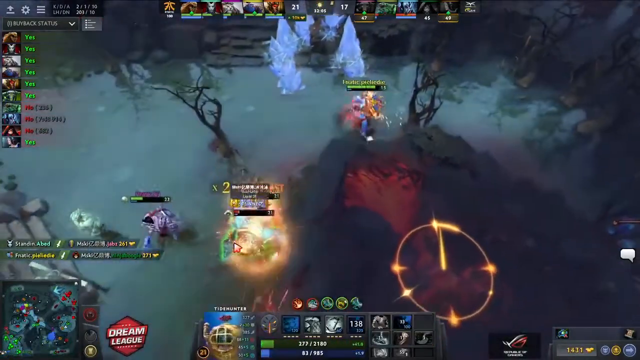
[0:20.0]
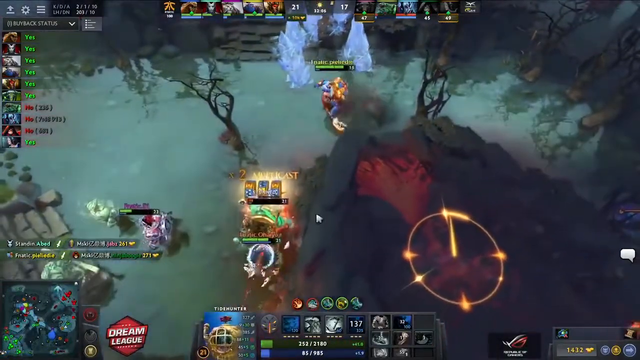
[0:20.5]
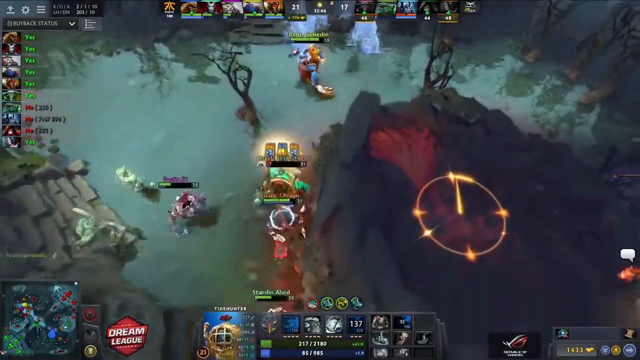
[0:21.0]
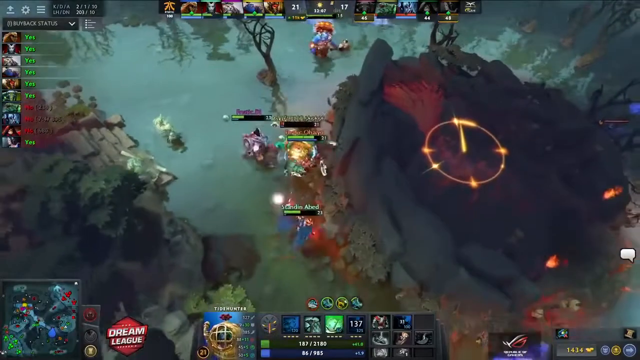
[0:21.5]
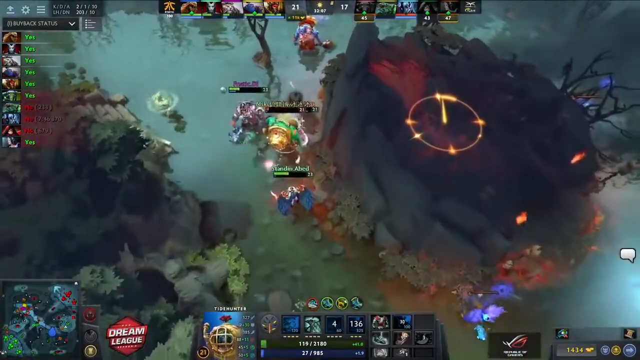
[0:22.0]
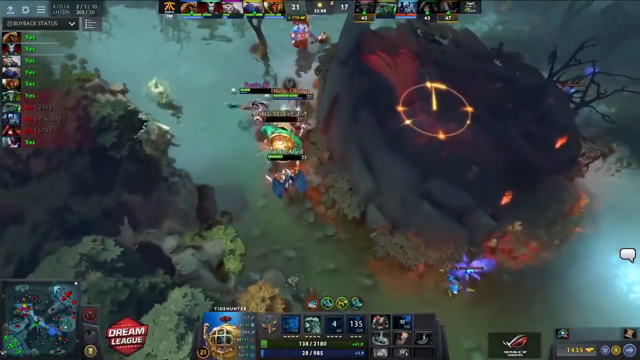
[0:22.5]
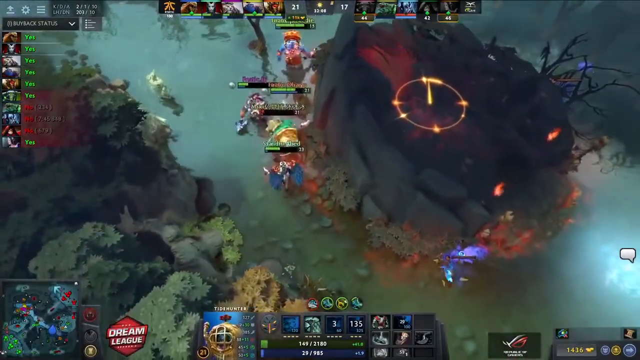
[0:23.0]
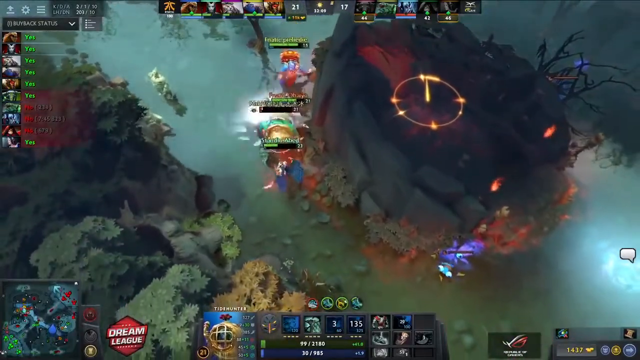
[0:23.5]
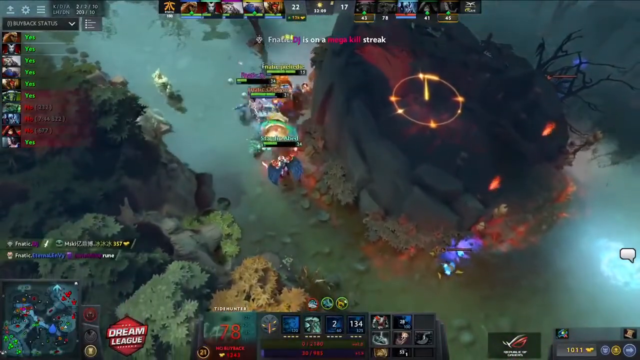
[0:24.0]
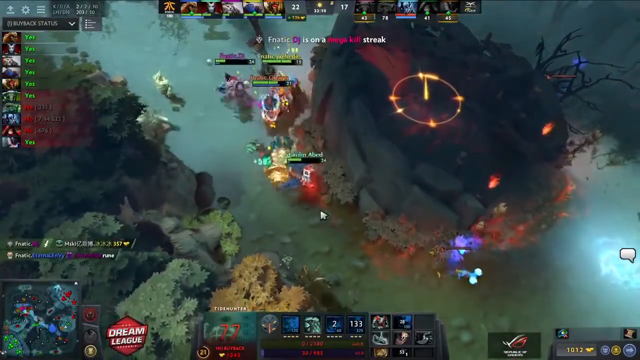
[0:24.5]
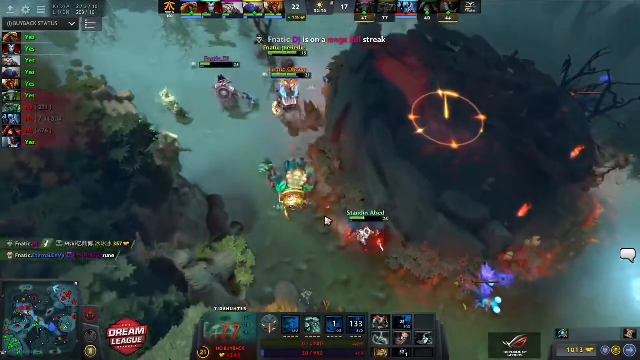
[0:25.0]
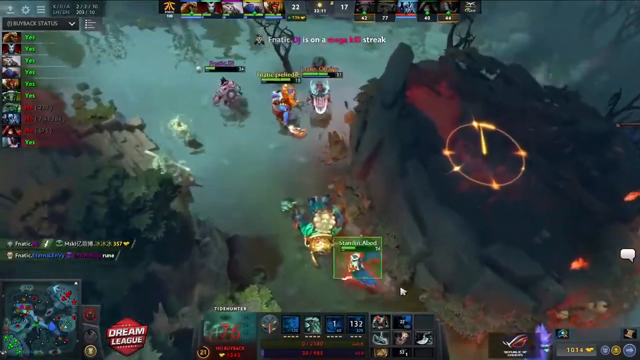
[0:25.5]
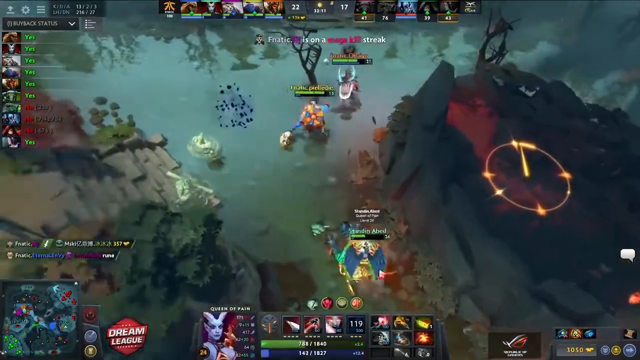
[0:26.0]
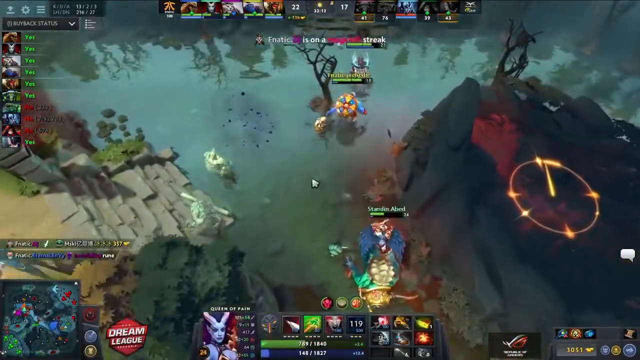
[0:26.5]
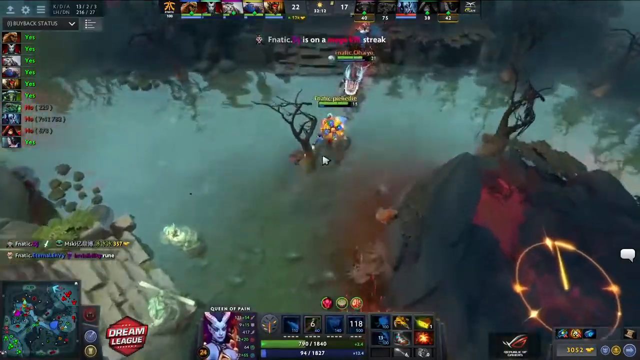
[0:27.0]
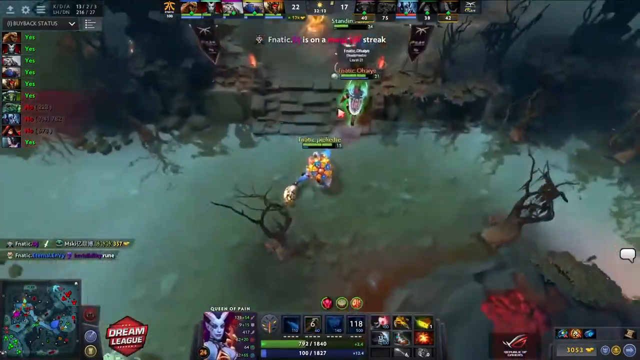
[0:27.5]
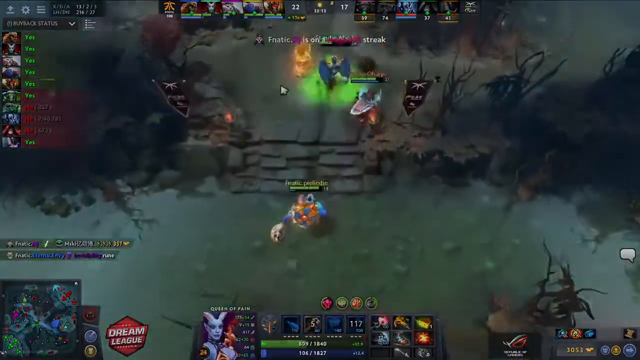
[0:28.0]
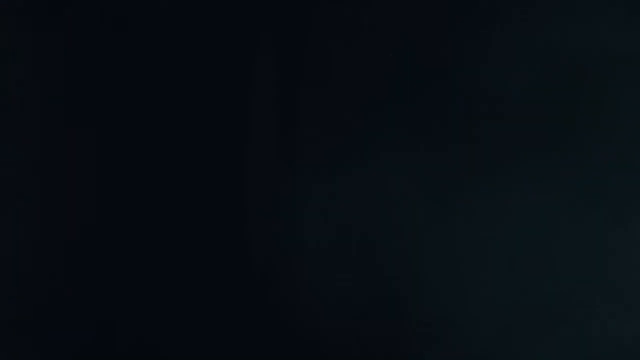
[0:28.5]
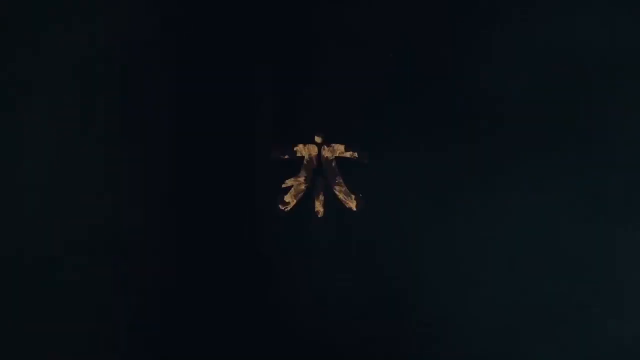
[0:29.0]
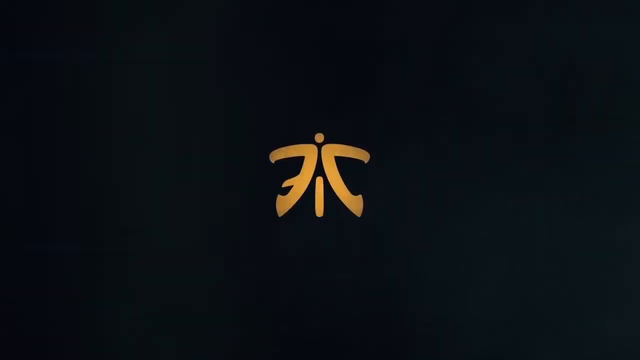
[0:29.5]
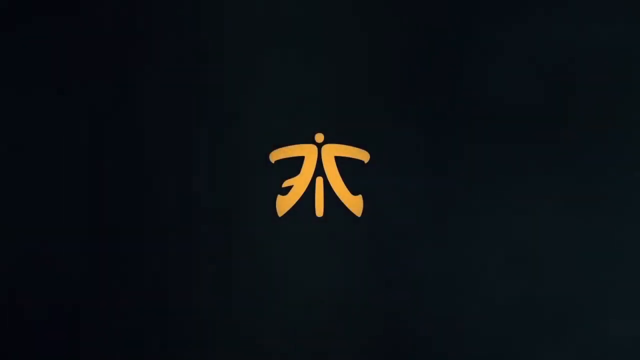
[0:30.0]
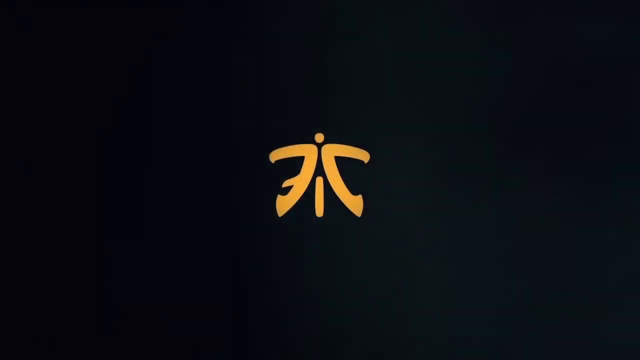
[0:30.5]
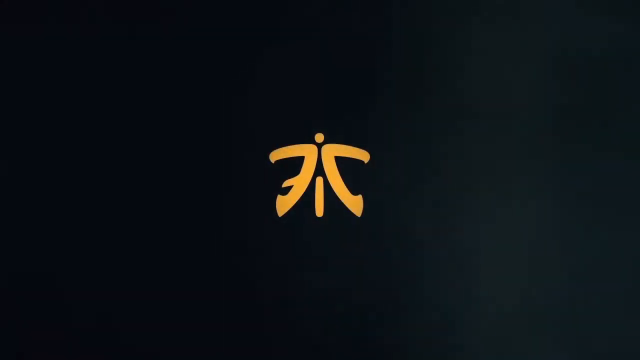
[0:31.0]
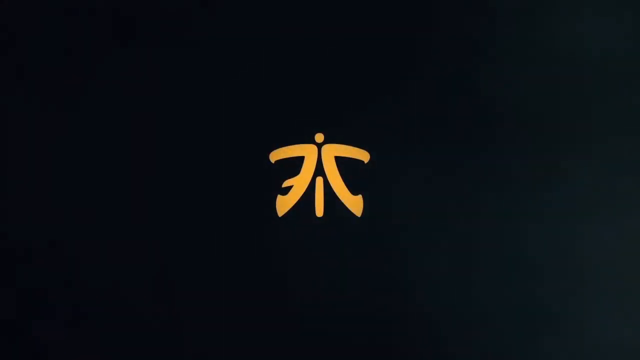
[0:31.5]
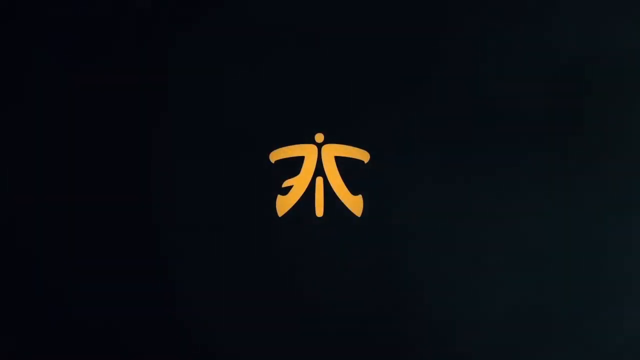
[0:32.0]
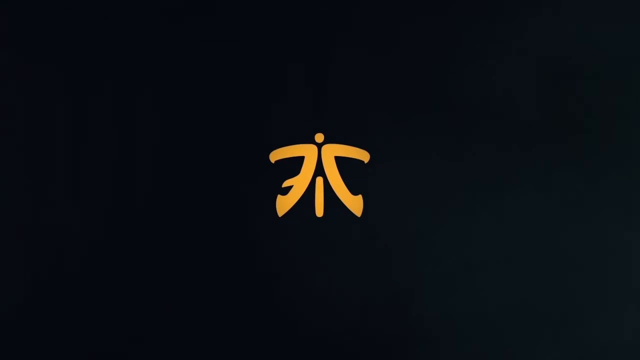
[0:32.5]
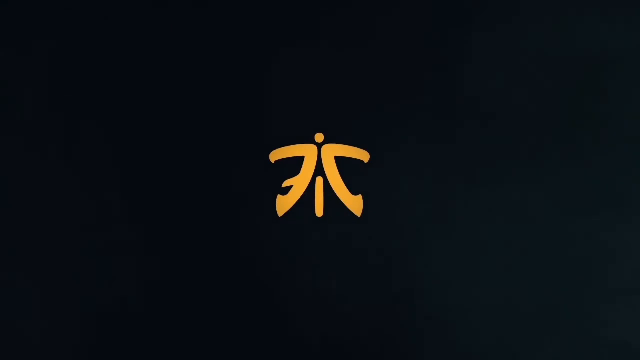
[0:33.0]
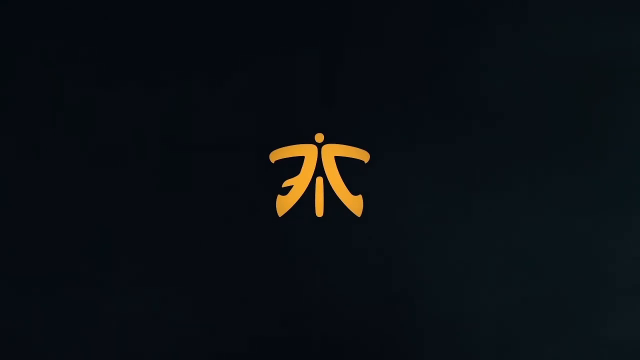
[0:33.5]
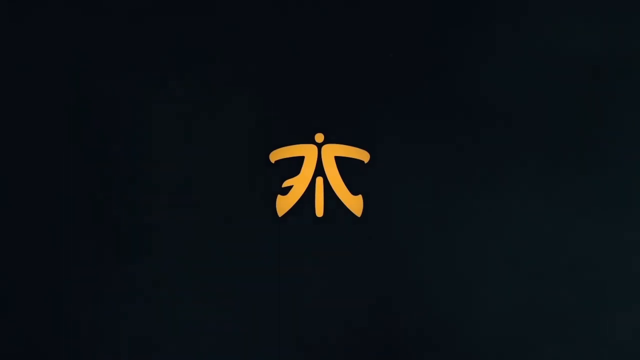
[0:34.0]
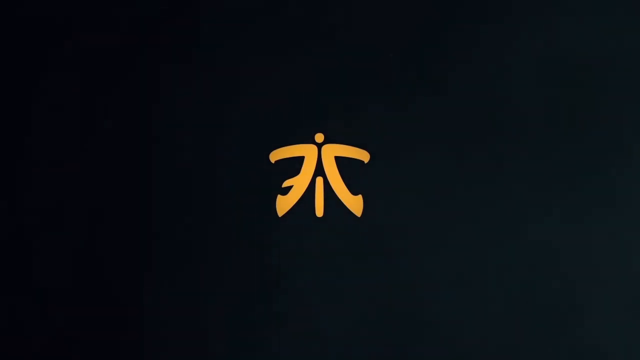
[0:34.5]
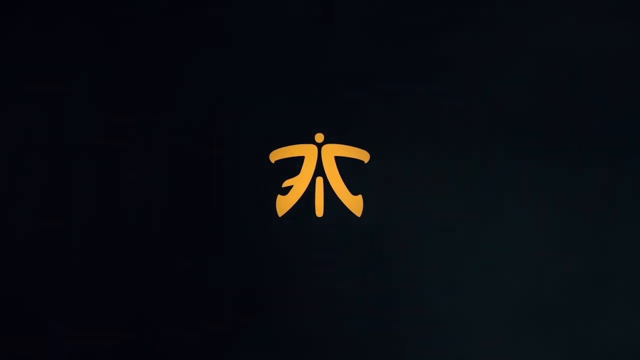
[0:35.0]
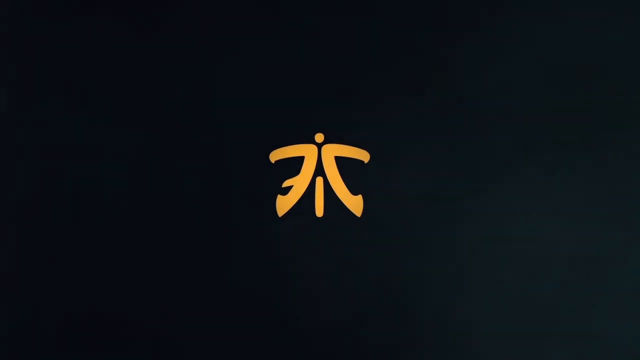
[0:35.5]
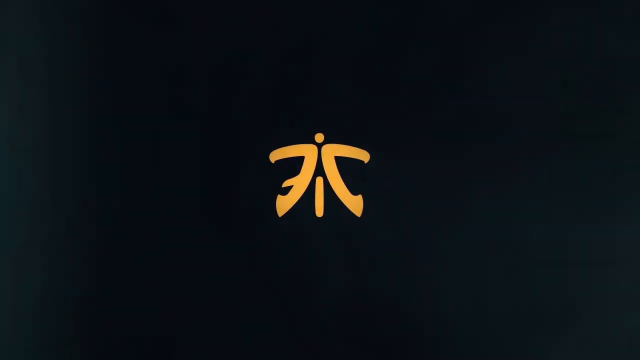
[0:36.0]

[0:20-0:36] The gameplay continues as the characters run across the map. Someone has very little HP left above their head: this character has the red beam of lines on their head showing the amount of HP, with only 5% left. The characters with green HP all team up, gang up on the person and kill them, and the person disappears. The top of the screen shows the characters and the amount of time it takes for them to respawn after being killed. The characters, all teammates, run up a staircase. The video then cuts to a black screen with a logo at the center: an orange logo with two lines back to back, one dot at the top and one line at the bottom. It stays on this until the end of the video.